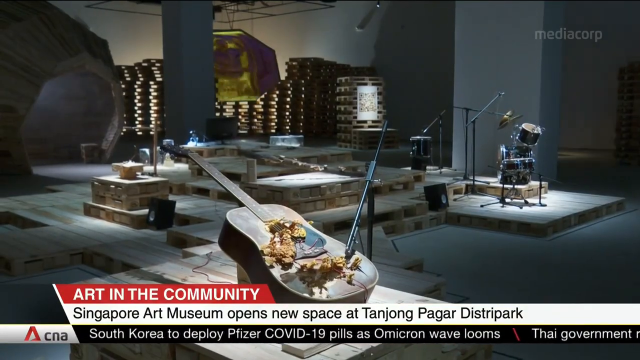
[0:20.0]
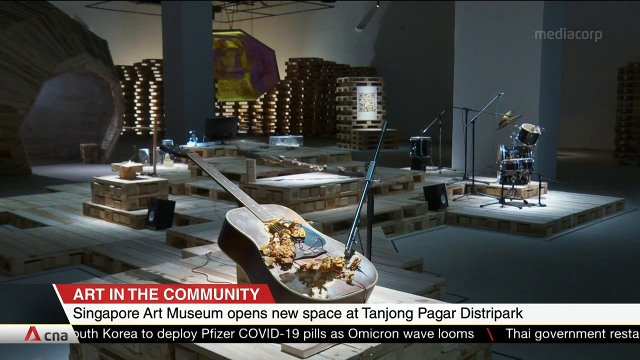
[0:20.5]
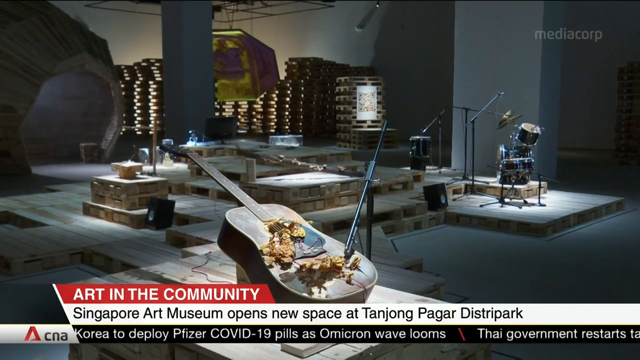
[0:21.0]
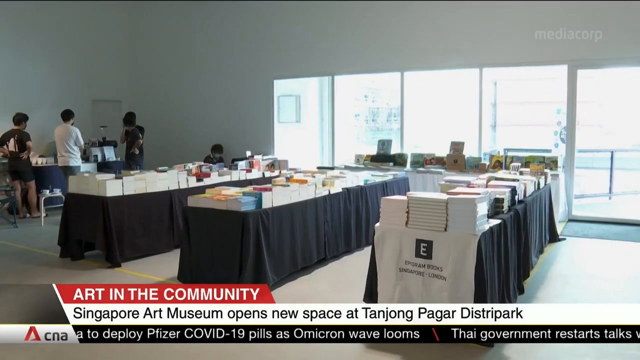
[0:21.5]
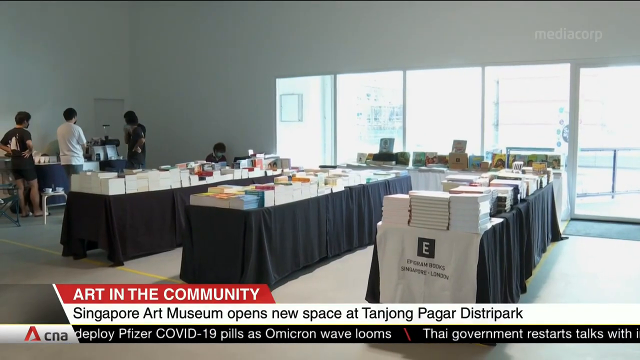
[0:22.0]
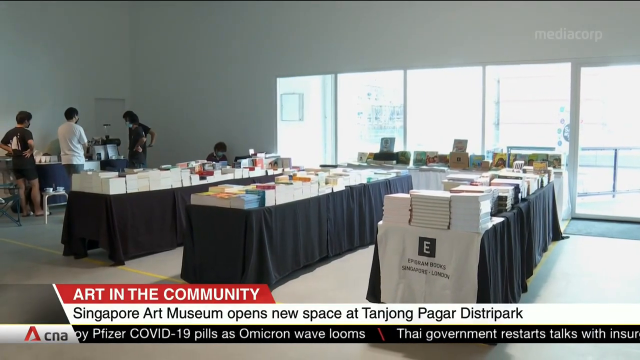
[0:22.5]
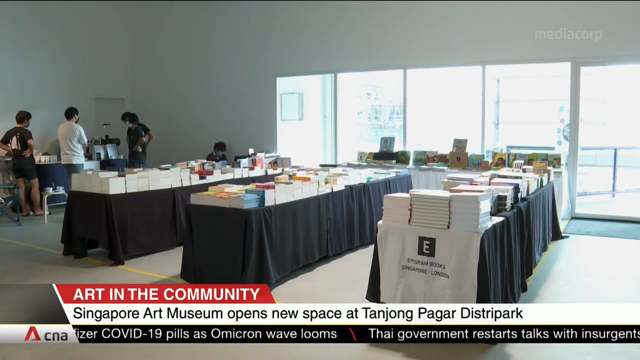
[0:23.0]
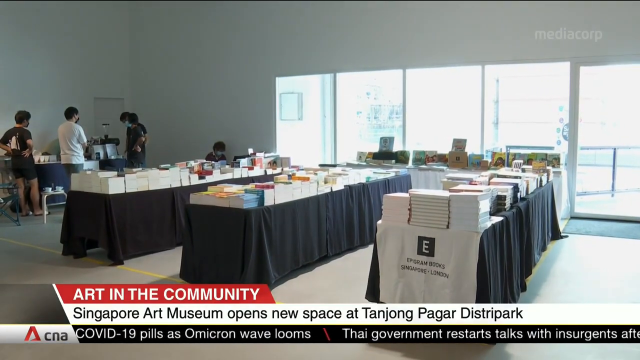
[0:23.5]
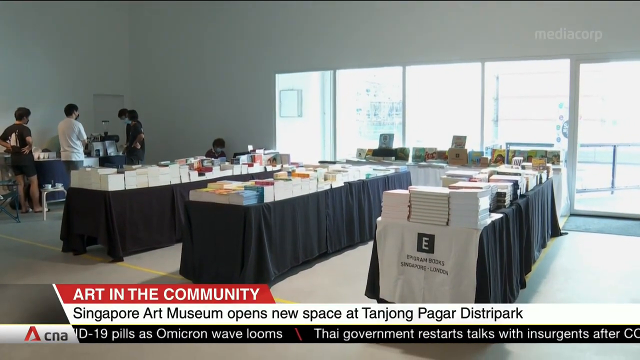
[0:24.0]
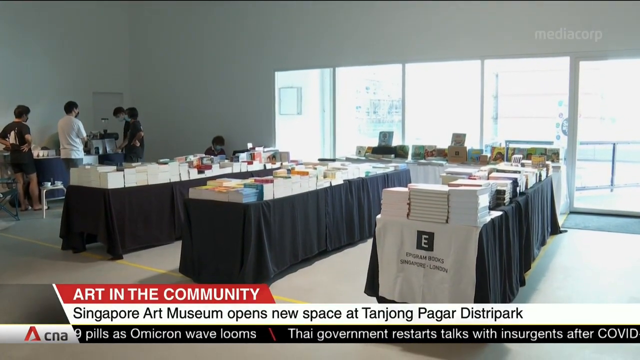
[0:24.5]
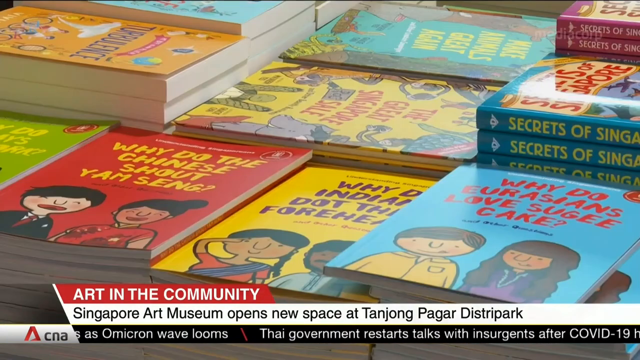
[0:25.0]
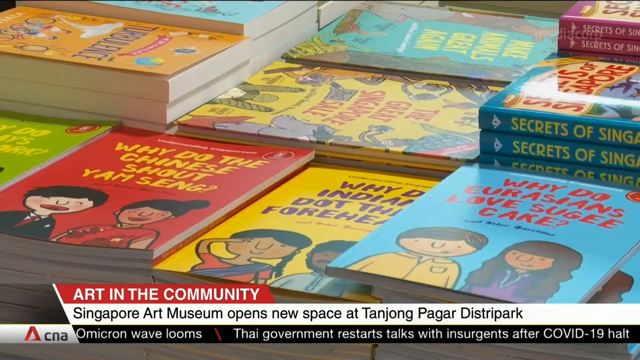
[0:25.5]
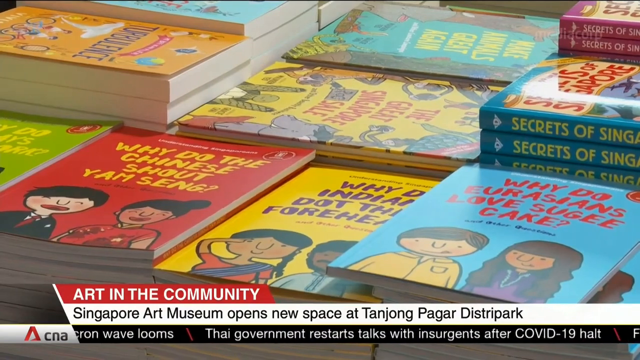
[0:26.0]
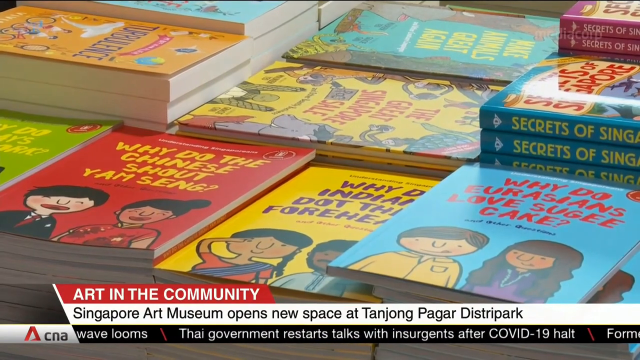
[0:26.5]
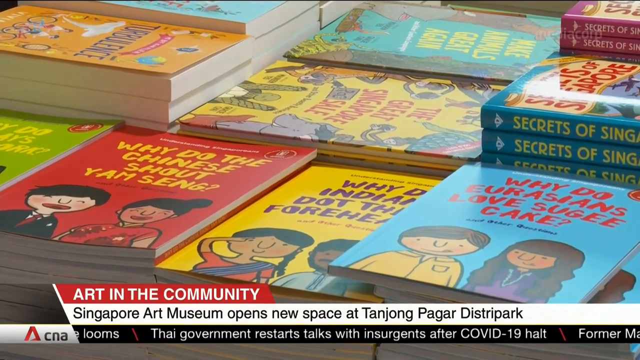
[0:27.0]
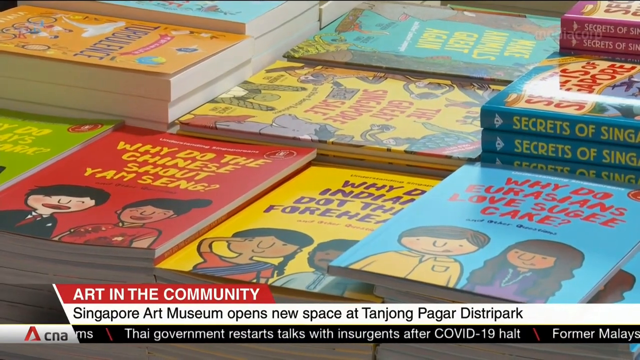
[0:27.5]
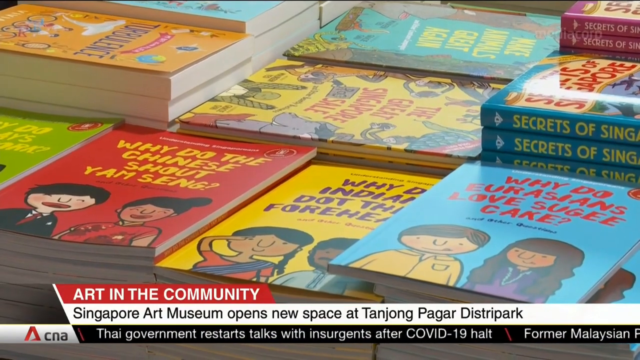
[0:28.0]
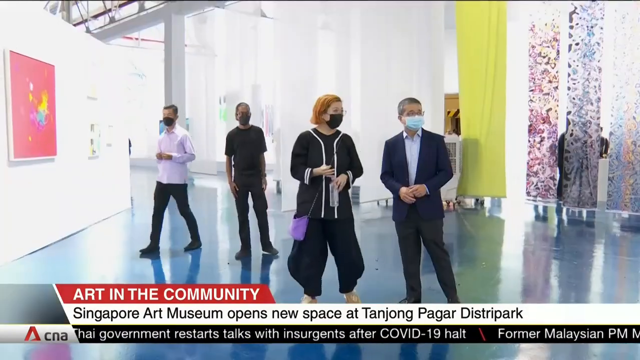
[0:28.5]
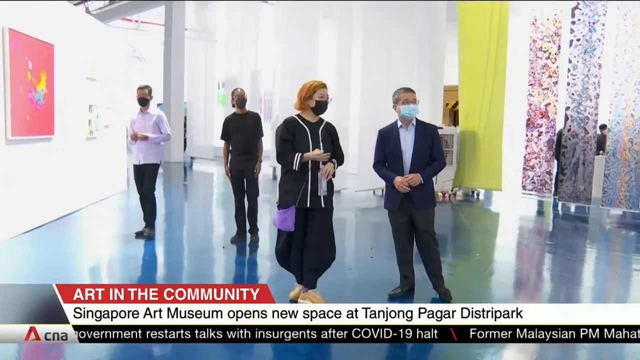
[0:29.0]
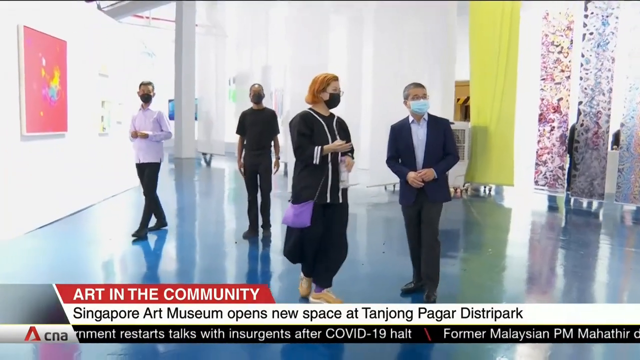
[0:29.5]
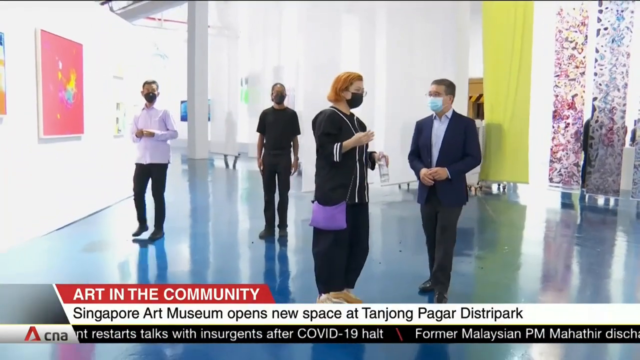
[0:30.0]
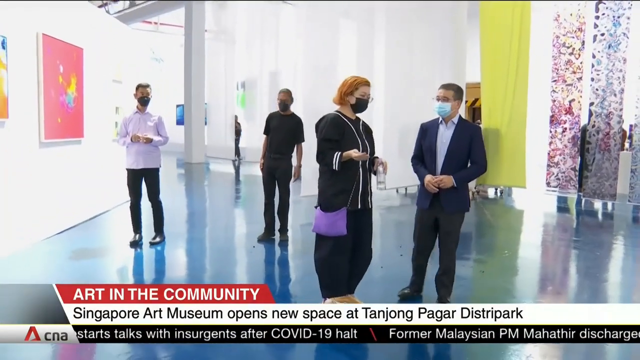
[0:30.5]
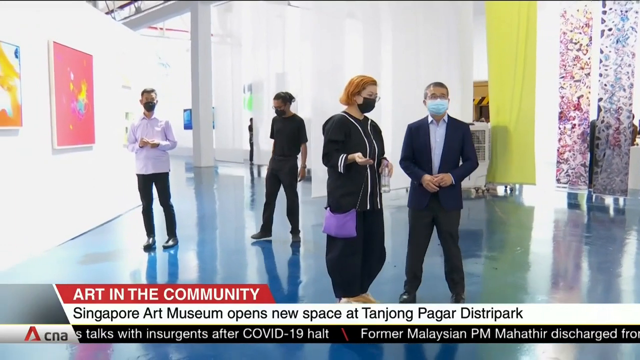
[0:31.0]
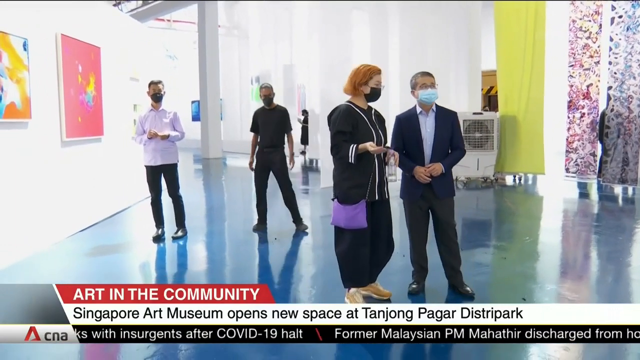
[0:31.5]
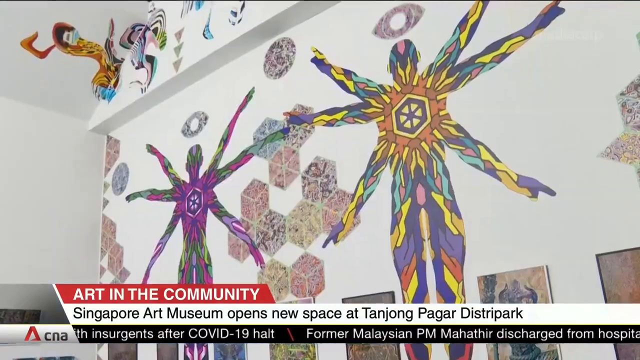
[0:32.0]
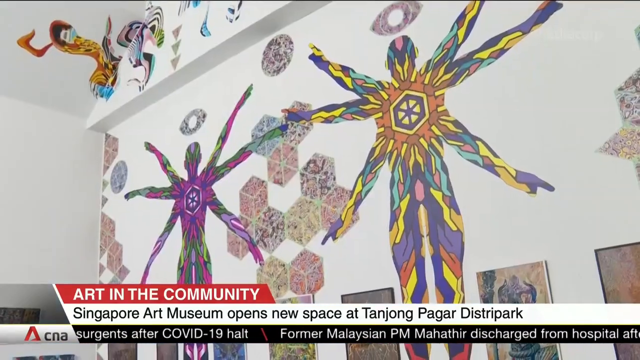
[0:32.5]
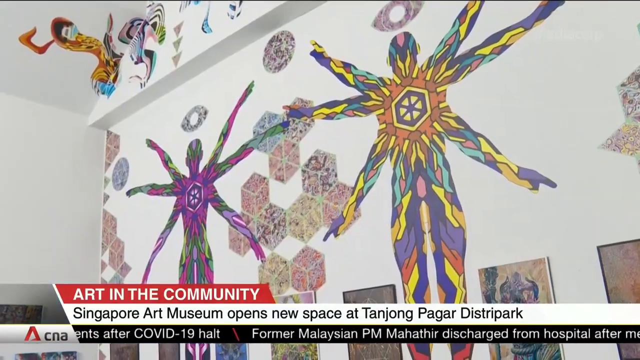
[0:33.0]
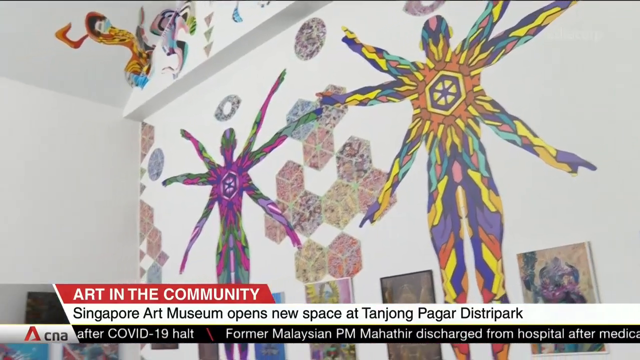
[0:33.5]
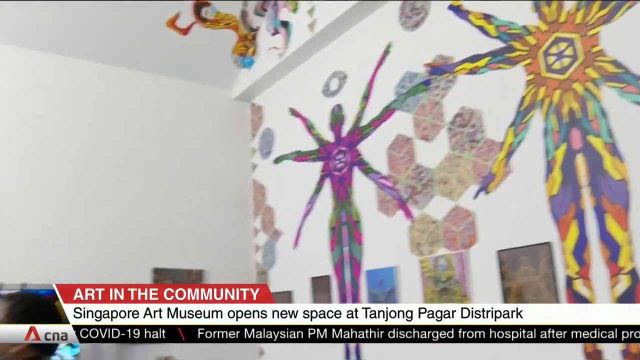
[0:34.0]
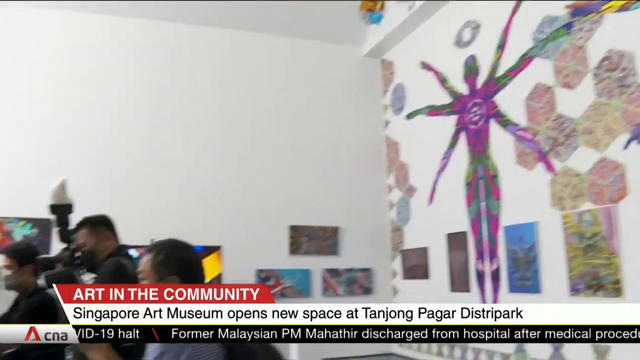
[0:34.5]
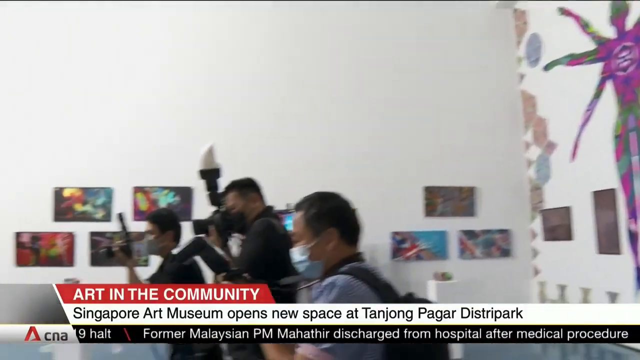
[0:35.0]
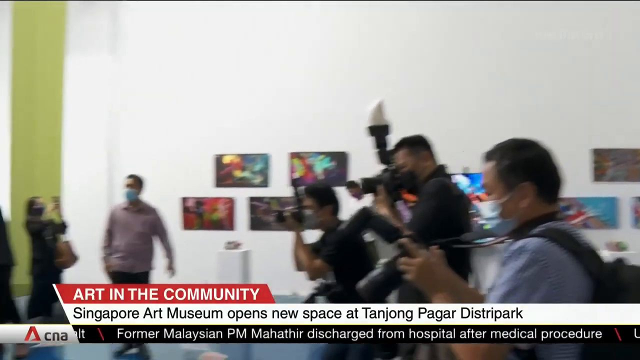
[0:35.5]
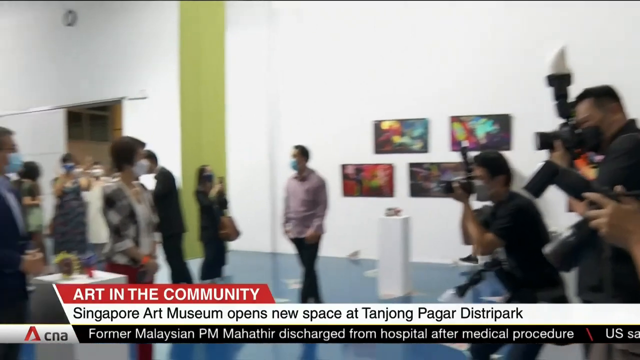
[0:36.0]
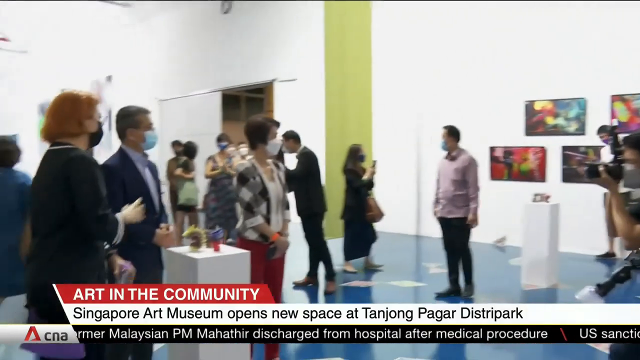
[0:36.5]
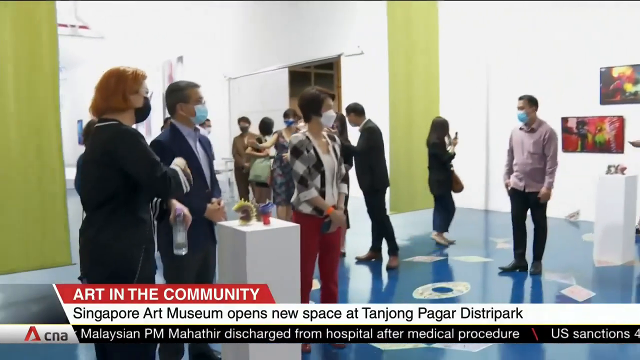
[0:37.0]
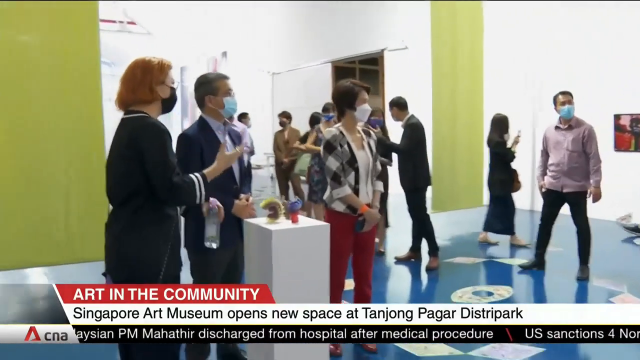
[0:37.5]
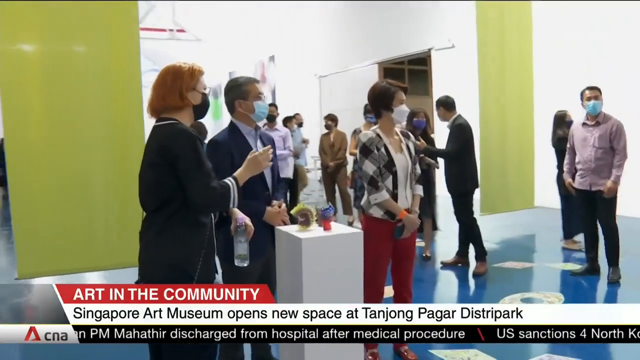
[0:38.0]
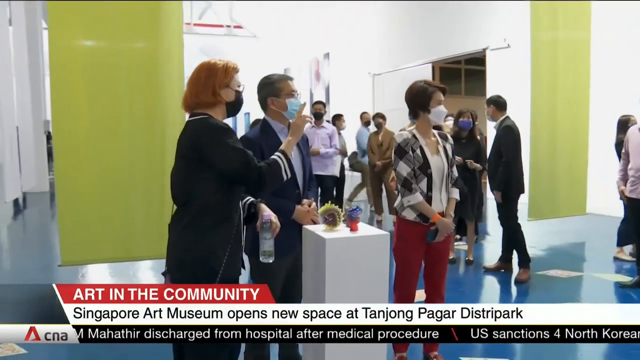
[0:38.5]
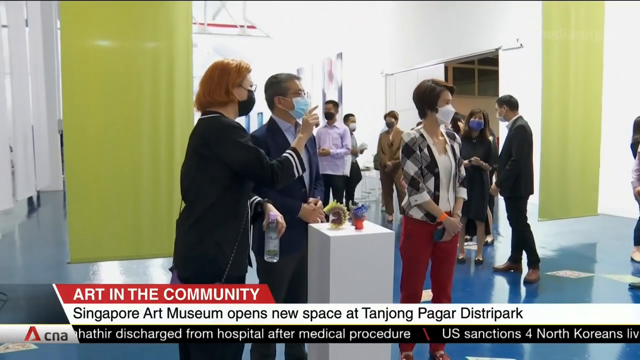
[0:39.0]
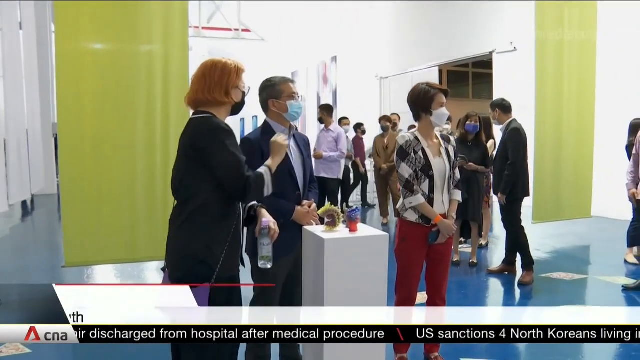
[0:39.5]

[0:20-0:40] A room inside the museum contains various displays. One is a guitar with something on top of it, and in the background is a set of black drums. The room is kind of dark, but the art pieces are lit by light from above, and various other pieces are in the background. A banner at the bottom of the screen reads "Art in the Community. Singapore Art Museum opens new space in Tanjong Pagar Distripark." The next scene shows tables covered in black tablecloths with piles of books on them. The tables are about 10 feet long and maybe 3 feet wide. Numerous windows are in the background, and to the left are four people, all wearing masks. The camera zooms into the books. Some of the titles read "Why do the Chinese shout yam seng?" and "Why do Europeans love sugee cake?" The books are very colorful, with characters on them.